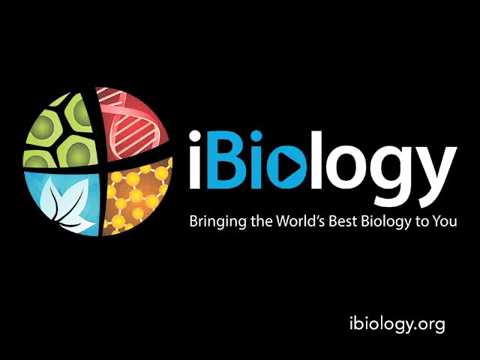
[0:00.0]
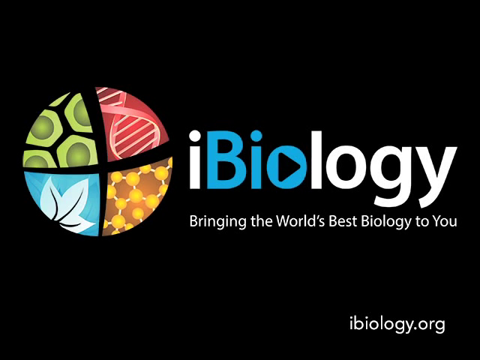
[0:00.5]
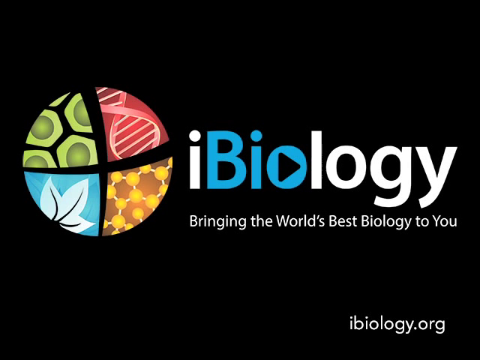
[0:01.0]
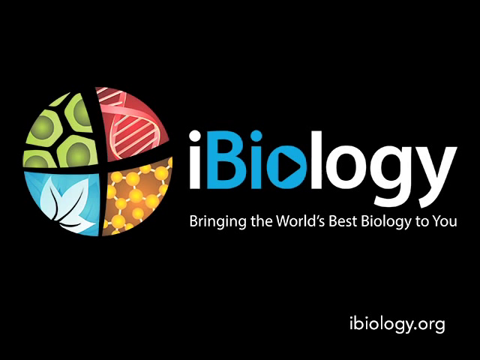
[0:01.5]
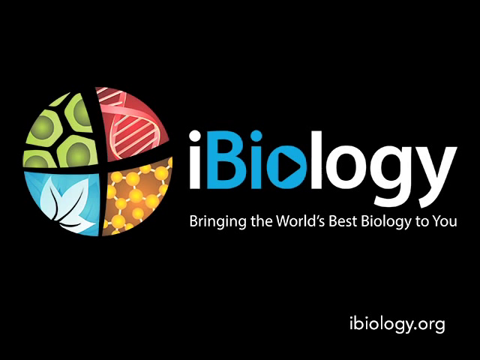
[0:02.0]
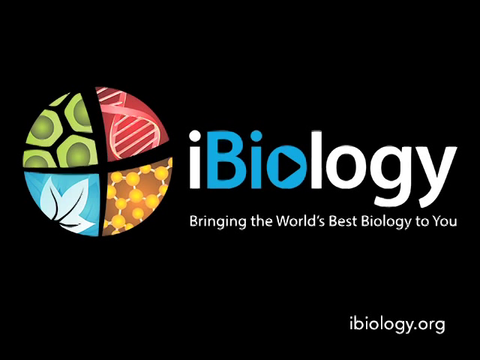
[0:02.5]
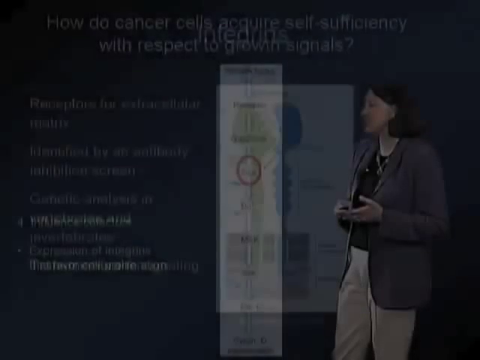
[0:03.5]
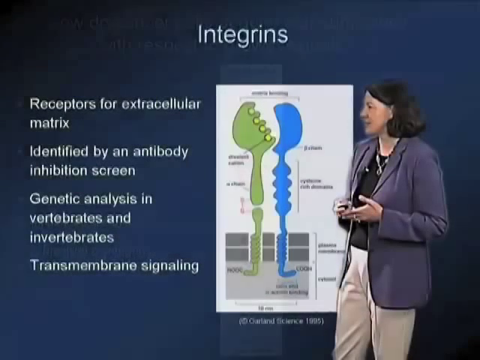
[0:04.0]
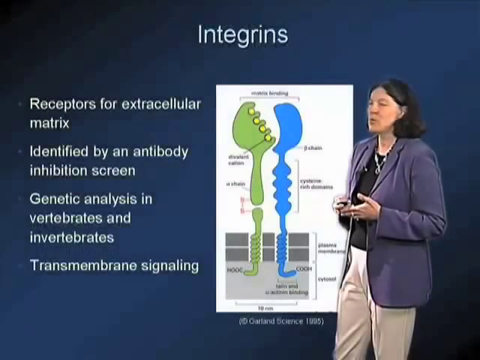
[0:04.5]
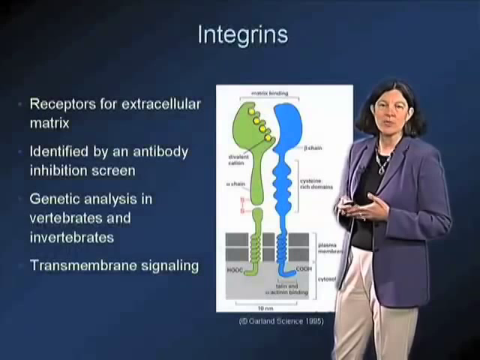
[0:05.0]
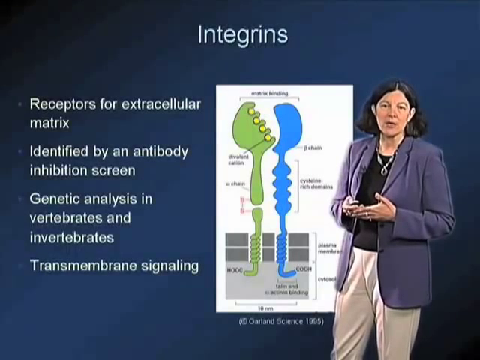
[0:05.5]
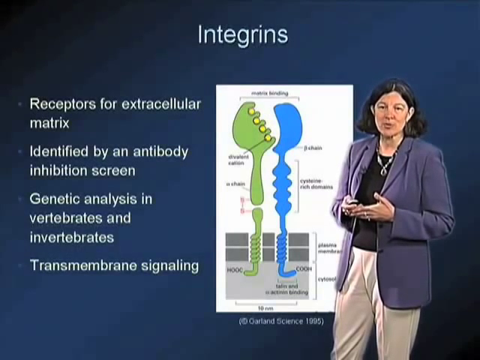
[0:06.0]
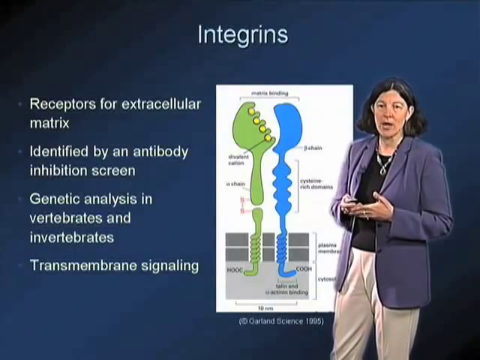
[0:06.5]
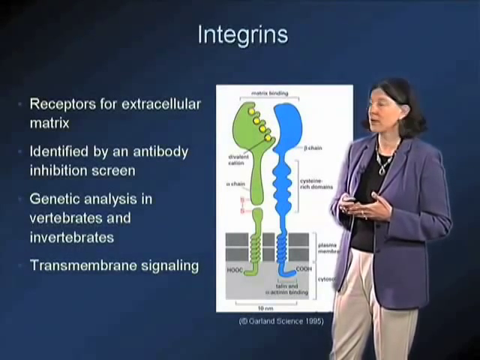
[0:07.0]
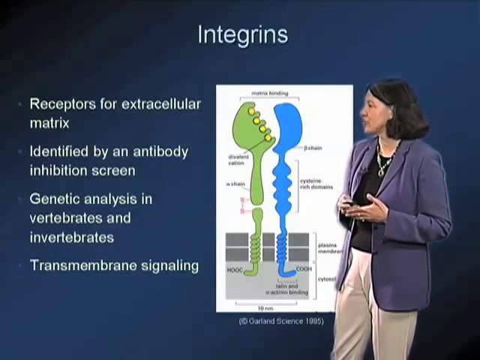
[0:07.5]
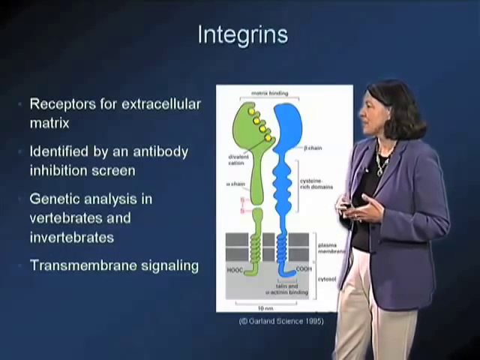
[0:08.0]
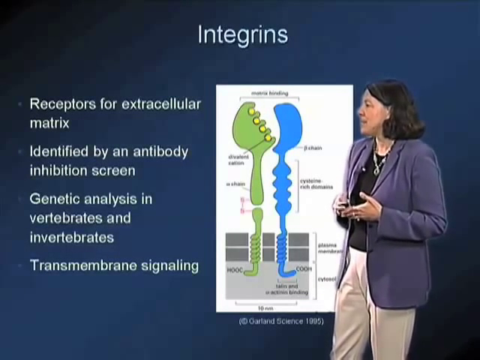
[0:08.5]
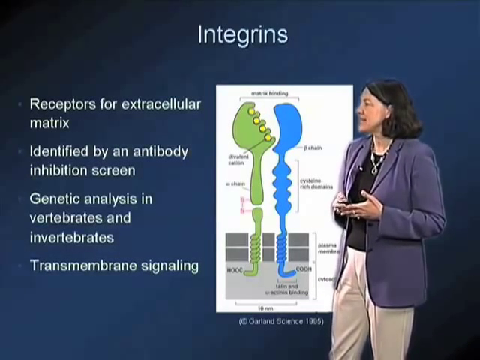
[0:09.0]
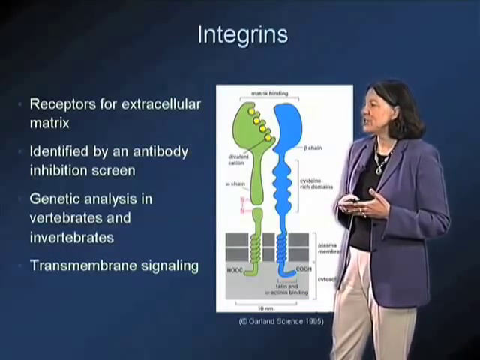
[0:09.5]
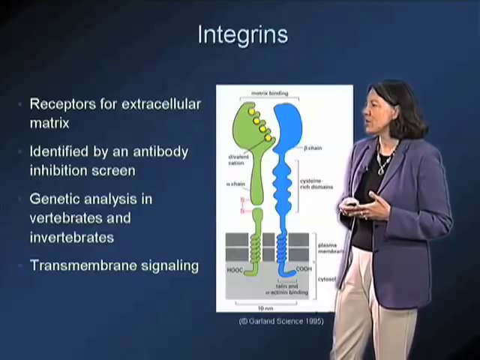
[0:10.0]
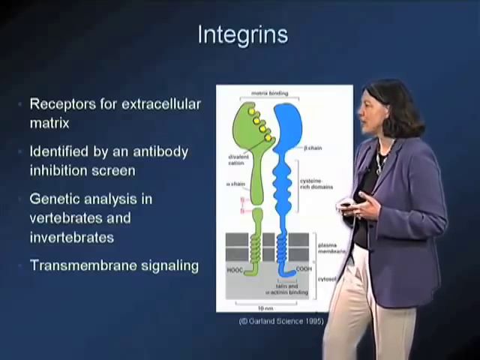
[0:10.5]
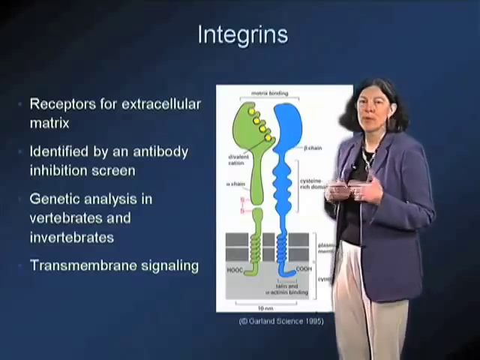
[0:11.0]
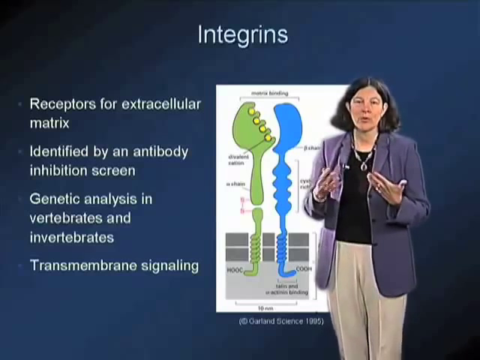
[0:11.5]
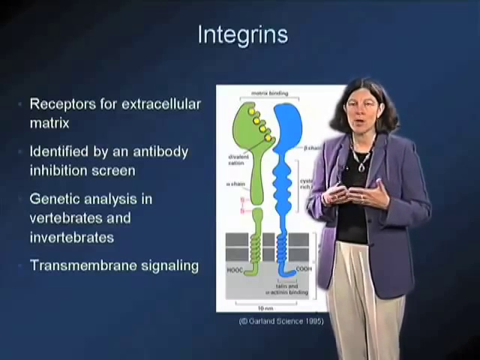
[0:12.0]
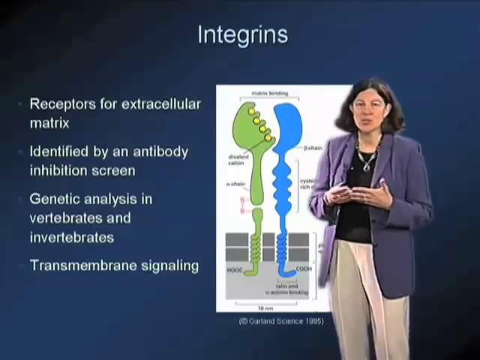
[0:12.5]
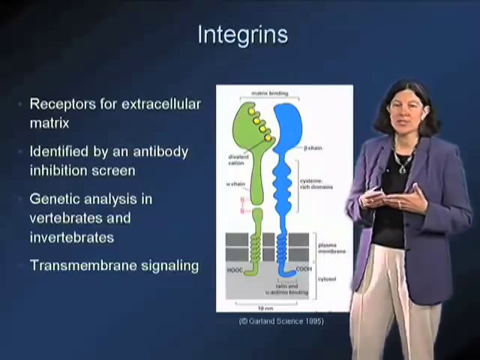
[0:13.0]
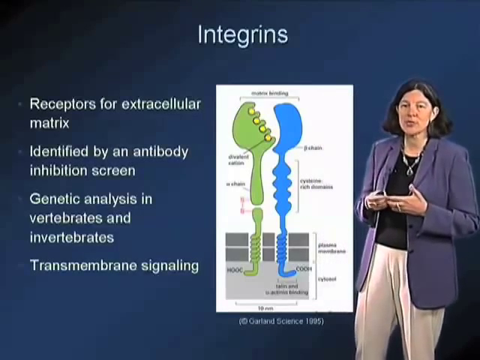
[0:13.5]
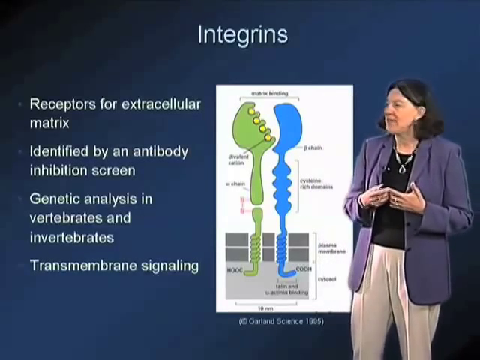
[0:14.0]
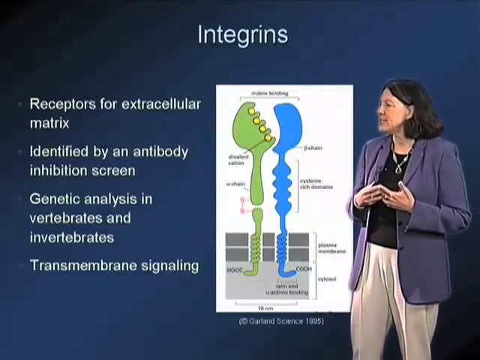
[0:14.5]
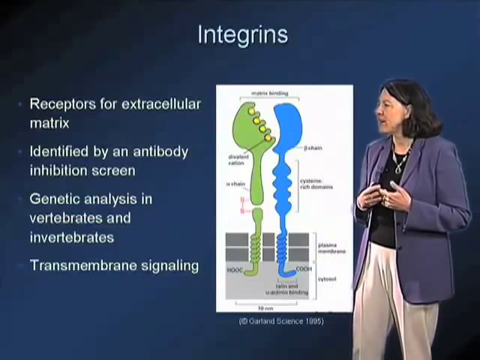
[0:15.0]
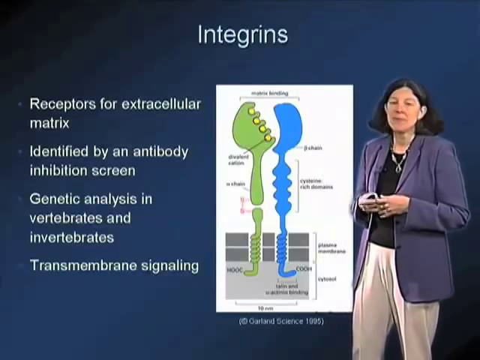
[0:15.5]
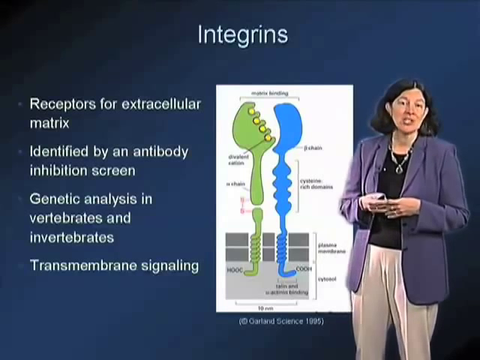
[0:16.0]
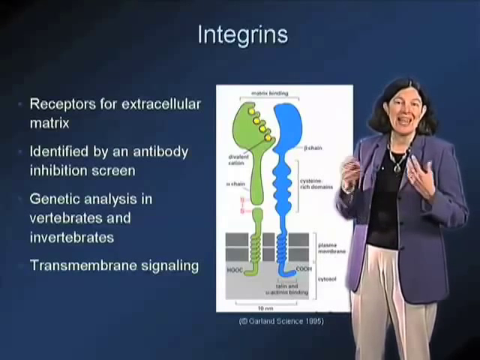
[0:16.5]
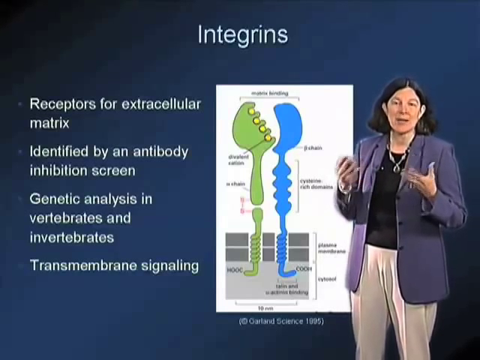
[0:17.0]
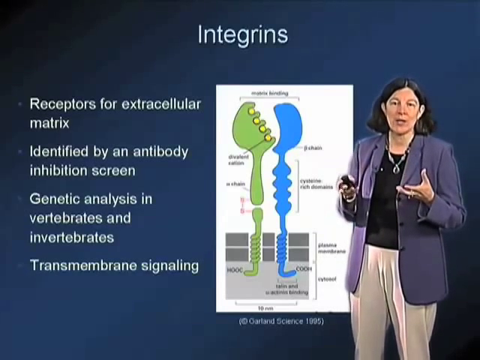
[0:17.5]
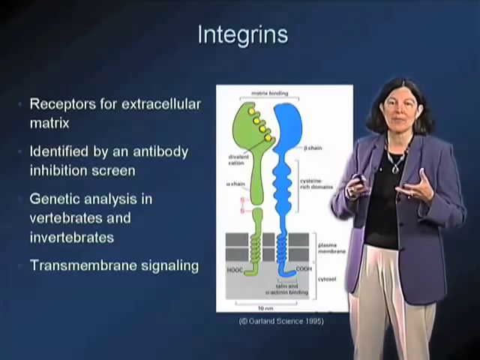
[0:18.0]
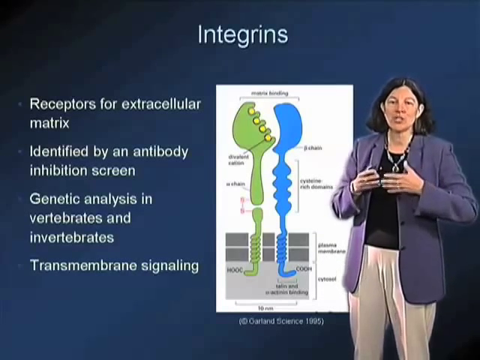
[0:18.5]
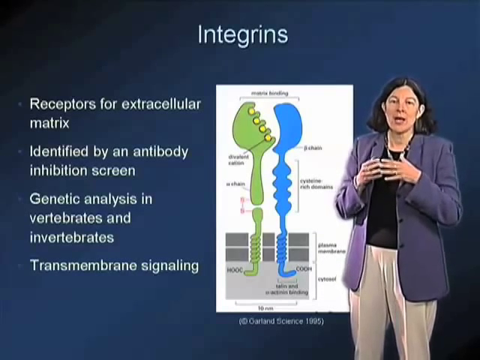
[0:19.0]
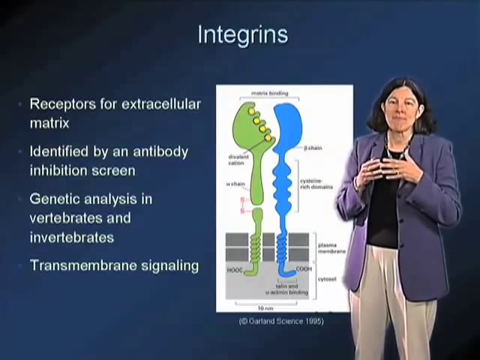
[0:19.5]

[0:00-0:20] On a black background, a small logo sits toward the left beside text reading "iBiology bringing the world's best biology to you", with a website in the bottom right corner. The logo has four quadrants showing different aspects of biology, such as DNA strands in the top right. The "bio" in iBiology is blue, while the rest of the text is white. The scene changes to a woman in the front right, looking toward the camera and speaking. Behind her is what appears to be a PowerPoint presentation with white text on a blue background, identifying that the information is about integrins. There is a brief description as well as an image next to the woman. She talks toward the screen, occasionally looking at the information in the background and using her hands for emphasis.